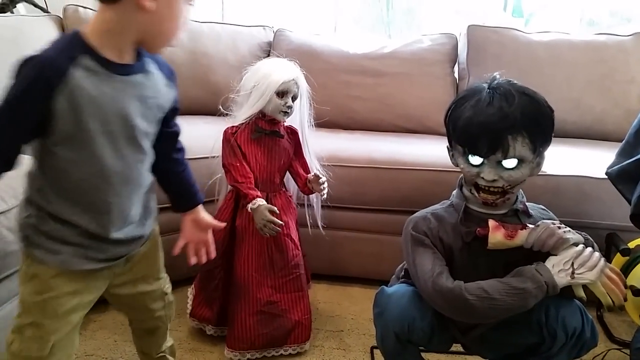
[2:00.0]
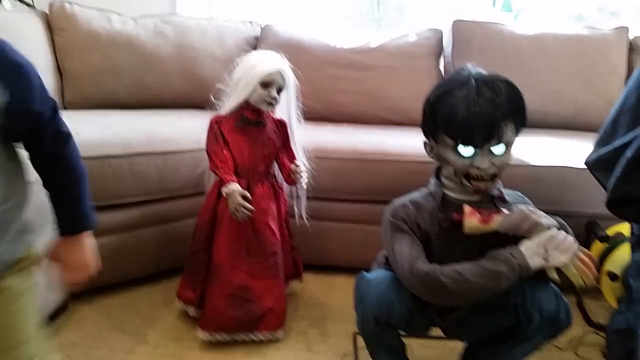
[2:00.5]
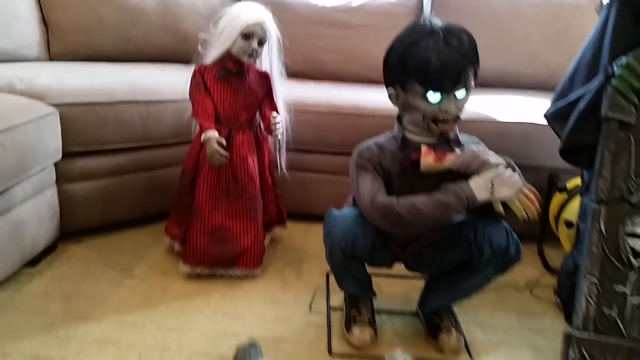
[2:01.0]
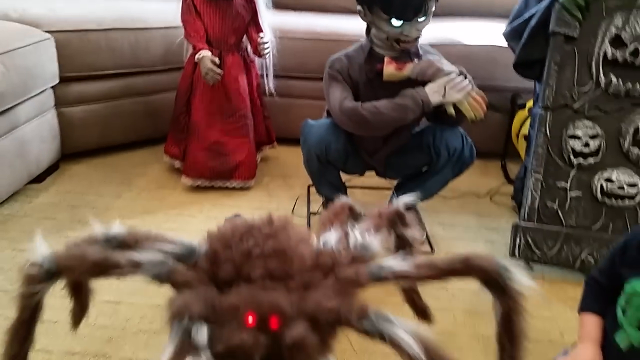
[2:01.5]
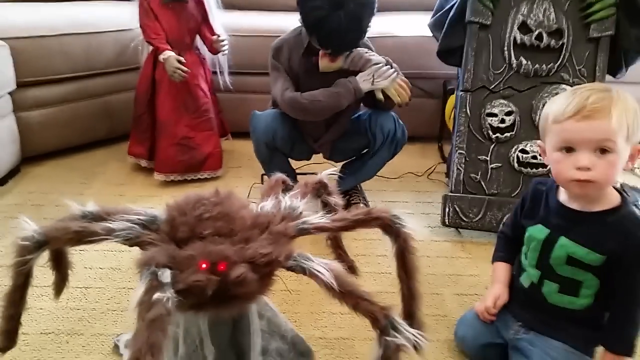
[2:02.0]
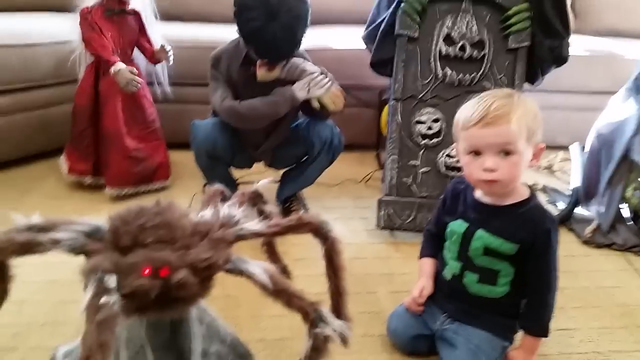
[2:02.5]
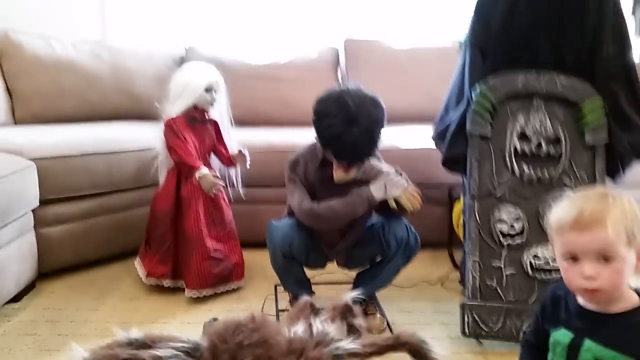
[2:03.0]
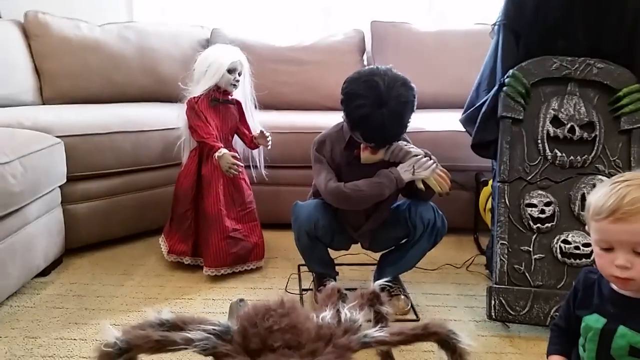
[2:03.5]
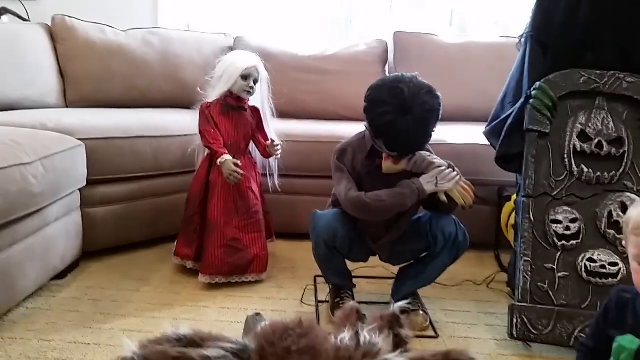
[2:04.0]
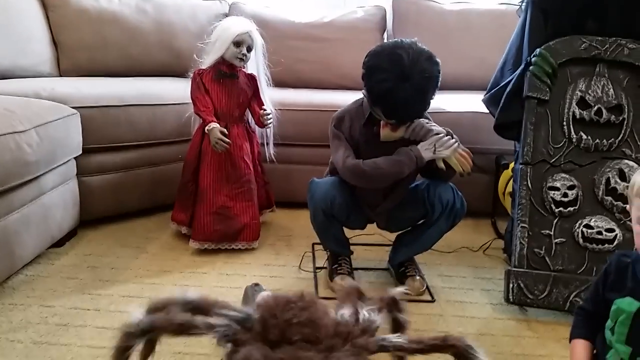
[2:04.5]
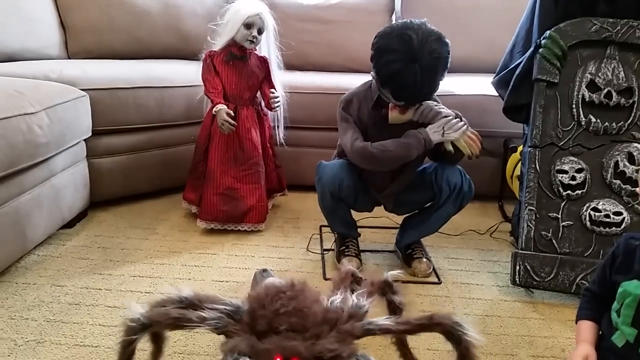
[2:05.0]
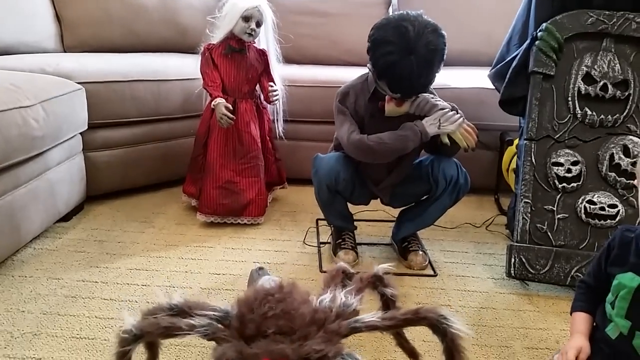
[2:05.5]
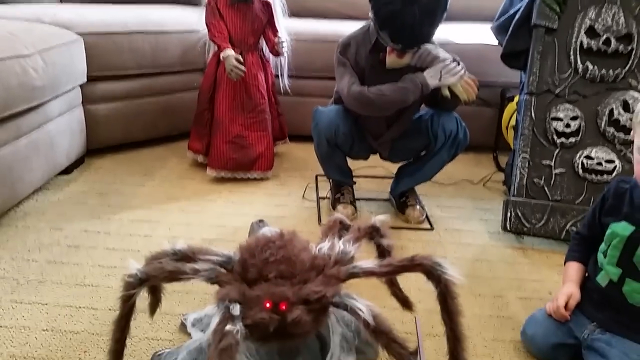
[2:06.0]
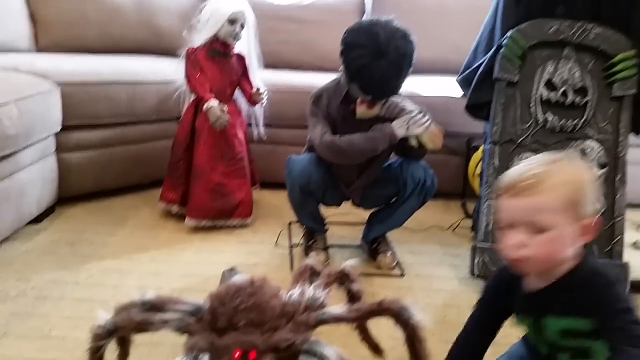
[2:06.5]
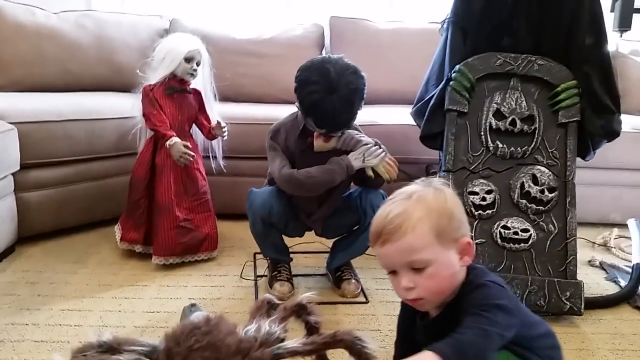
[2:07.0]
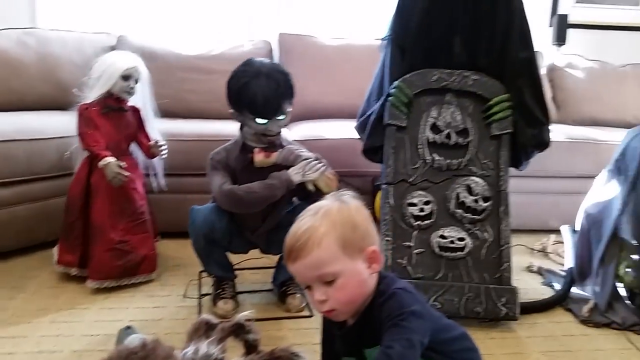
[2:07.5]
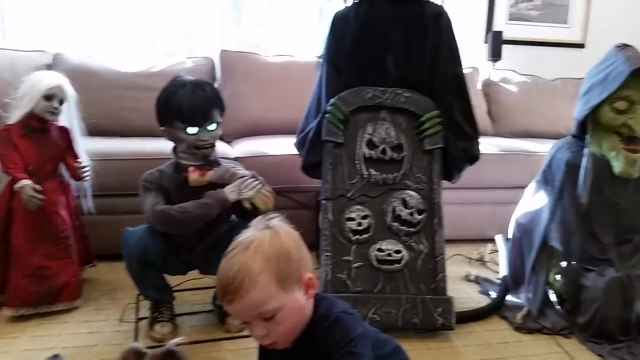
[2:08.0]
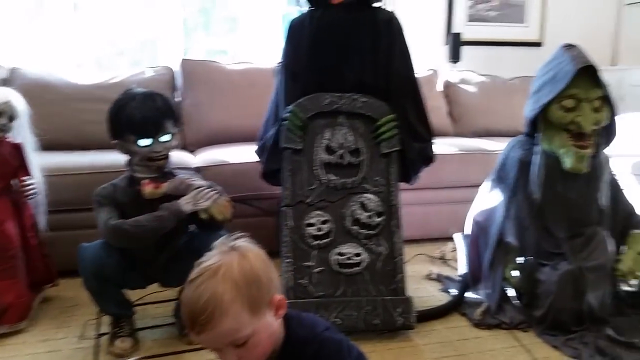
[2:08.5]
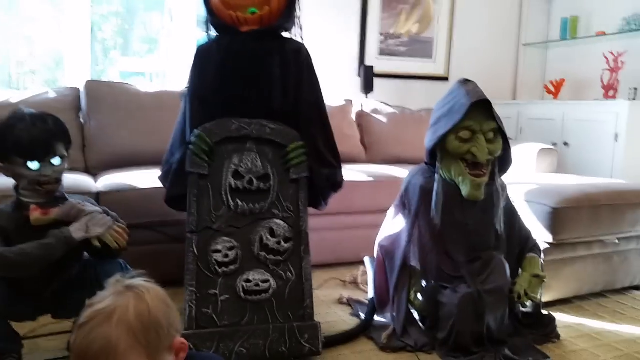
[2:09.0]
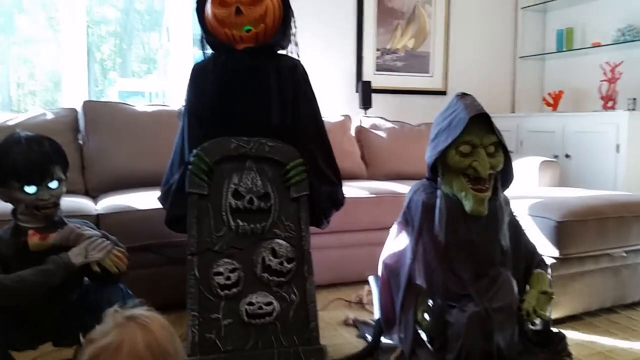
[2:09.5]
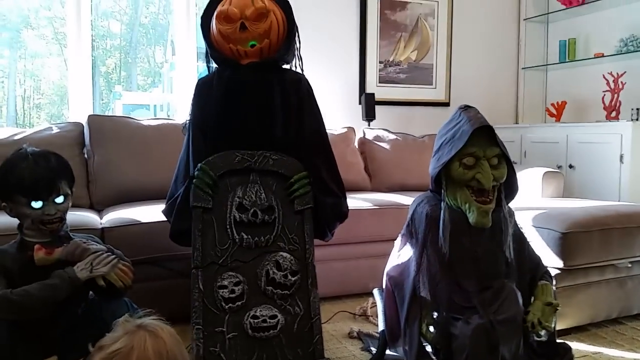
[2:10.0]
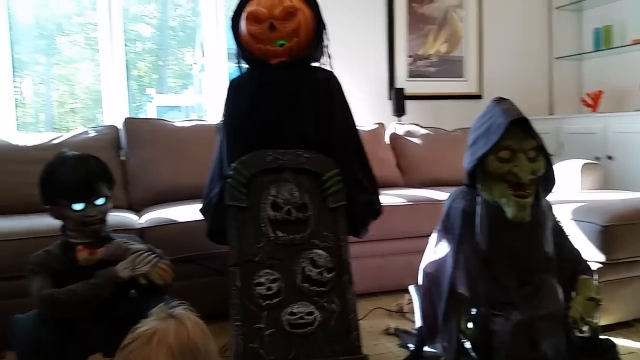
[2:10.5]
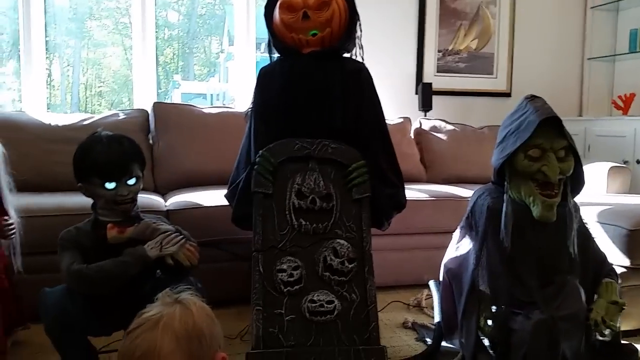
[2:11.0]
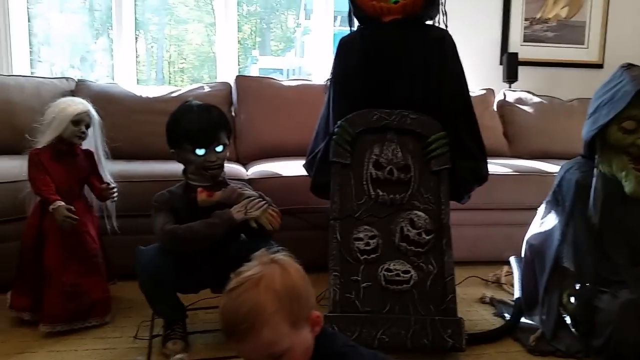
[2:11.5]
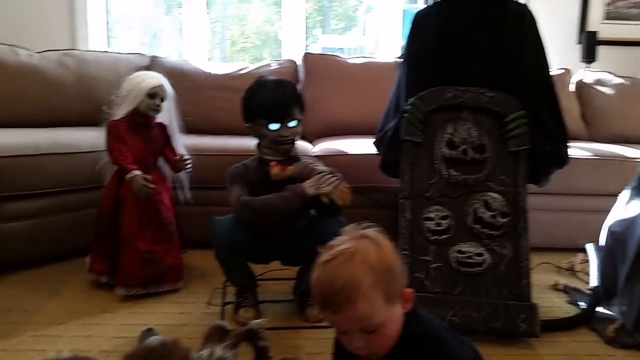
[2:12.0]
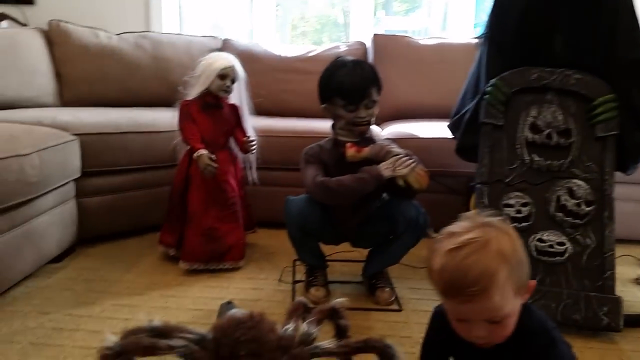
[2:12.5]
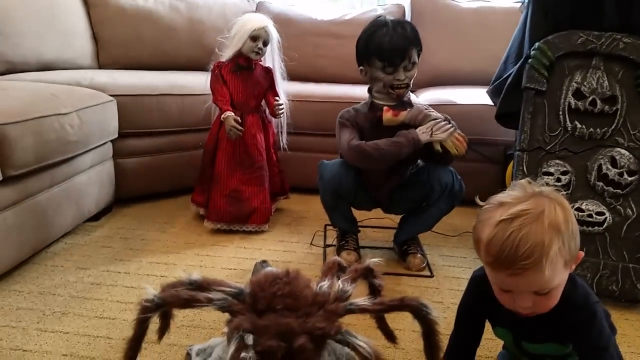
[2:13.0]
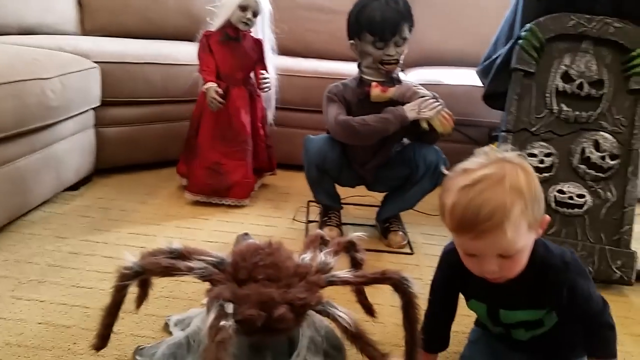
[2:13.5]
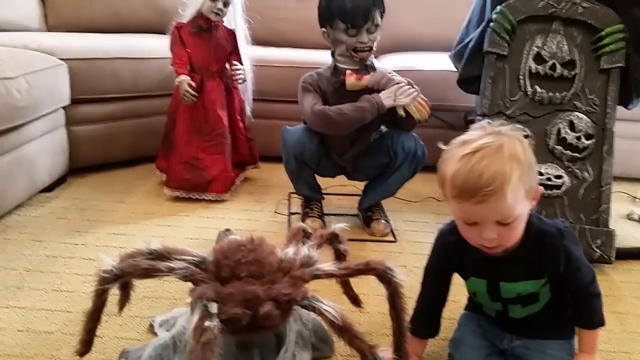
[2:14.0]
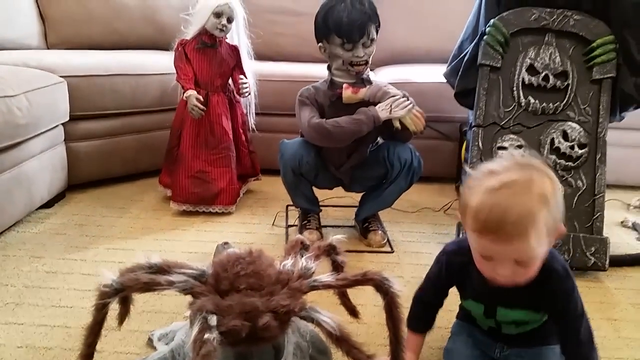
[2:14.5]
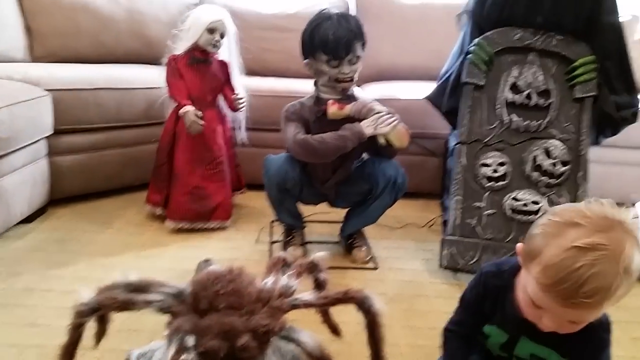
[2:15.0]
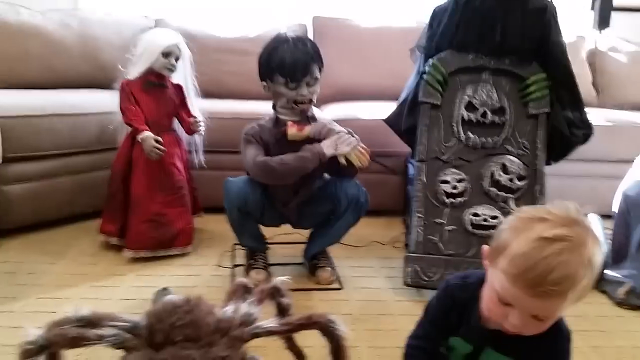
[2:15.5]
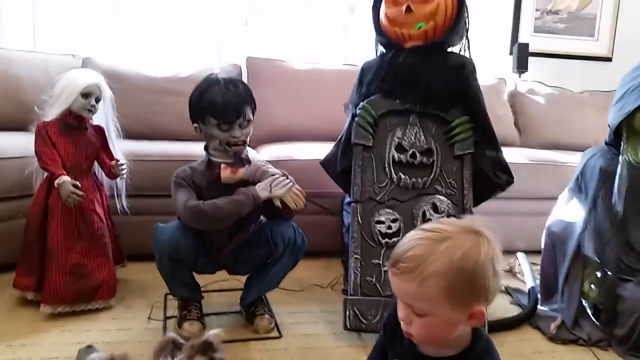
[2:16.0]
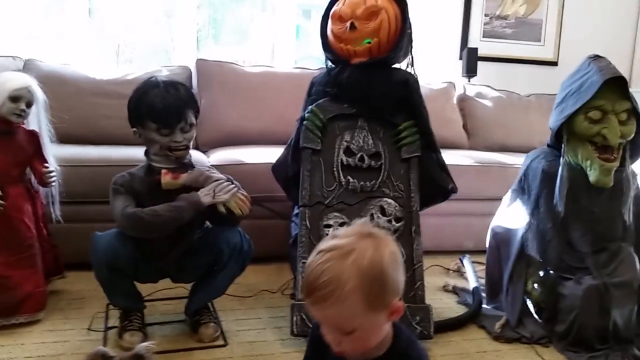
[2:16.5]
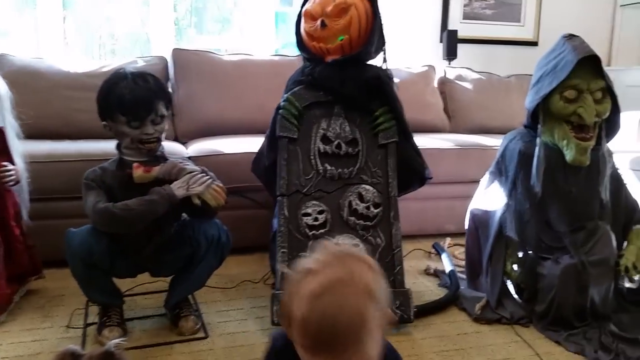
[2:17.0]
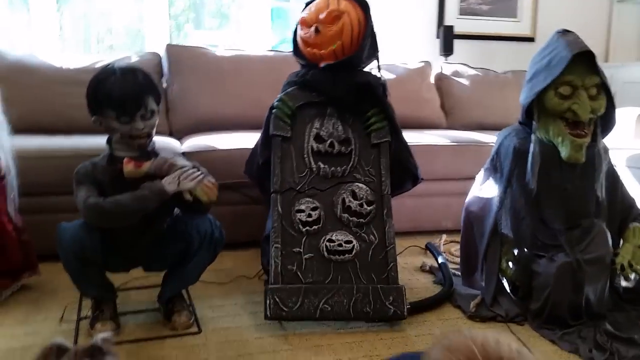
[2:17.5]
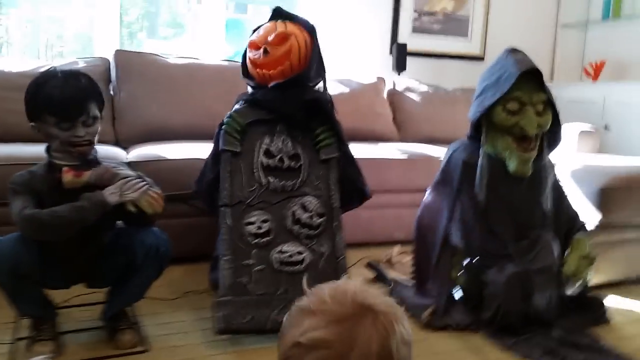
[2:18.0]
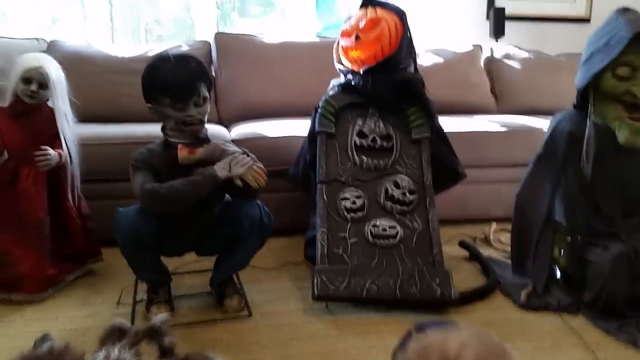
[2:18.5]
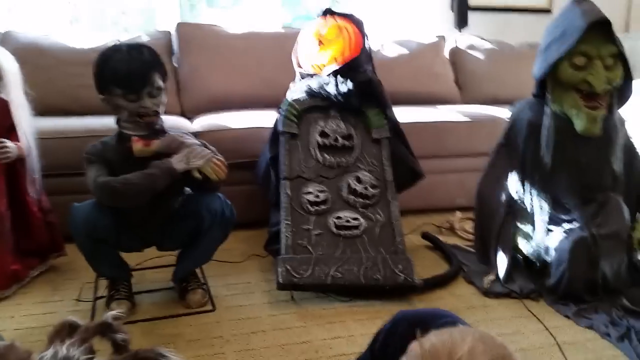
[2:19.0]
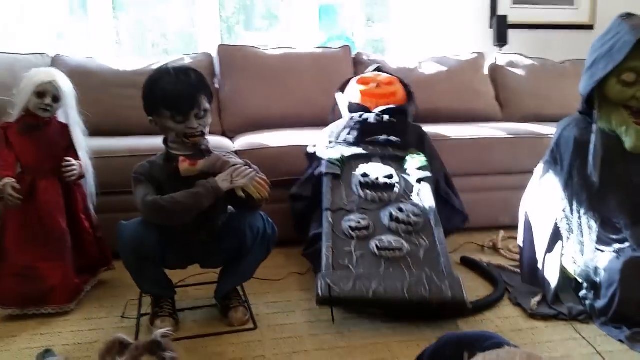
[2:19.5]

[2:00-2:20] The girl doll apparently swivels back and forth, her hands kind of pointed outwards. Everything is a little clearer from this view. The dark-haired little boy moves in and out of the frame. The blonde little boy sits next to the box and the spider and appears to be playing with the box. The witch and the jack-o-lantern with the cape are visible, and the jack-o-lantern falls over again. The carpet on the floor is tan with what appears to be a box or checked pattern; it appears to be actual carpeting rather than a rug. On the white wall behind them is hanging artwork. White shelves to the right hold some decorative objects, one of which appears to be an orange coral, along with a red coral.